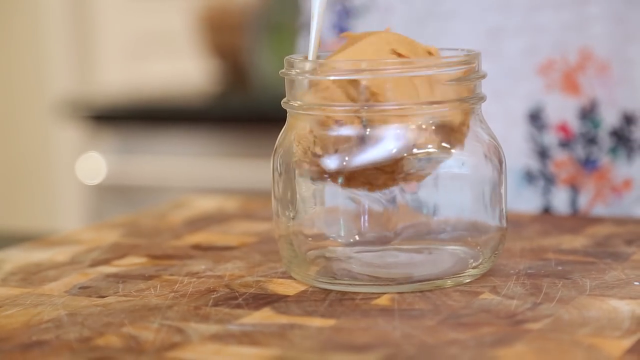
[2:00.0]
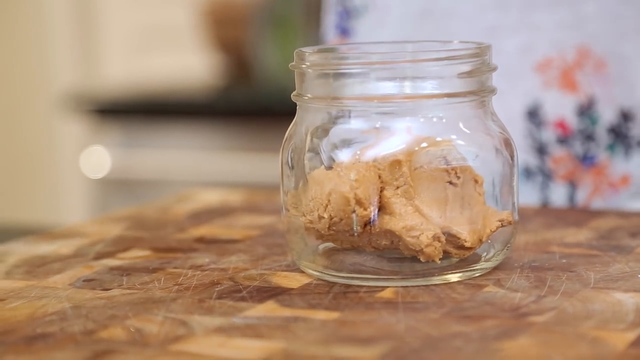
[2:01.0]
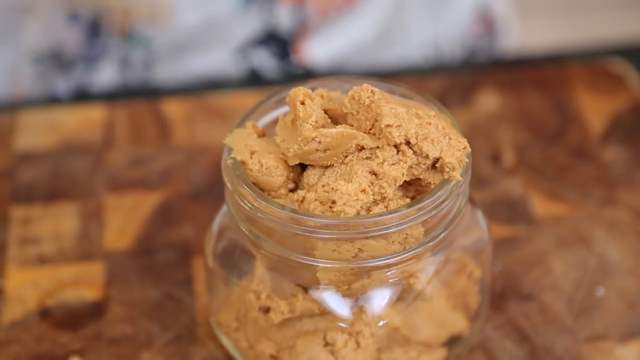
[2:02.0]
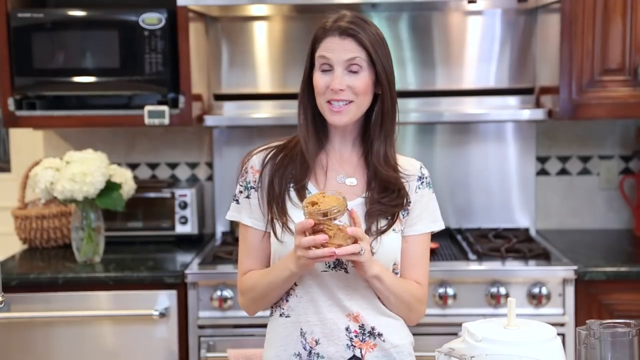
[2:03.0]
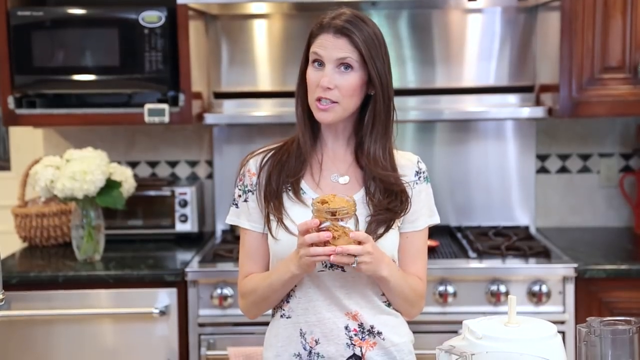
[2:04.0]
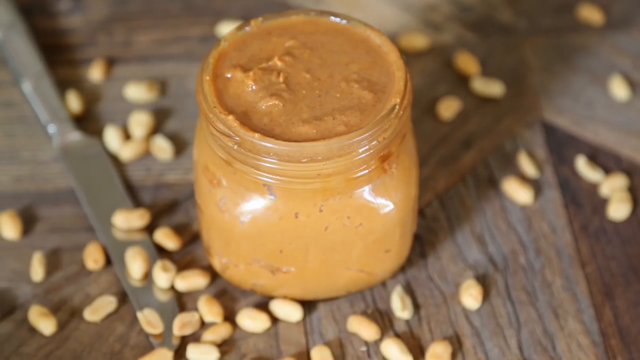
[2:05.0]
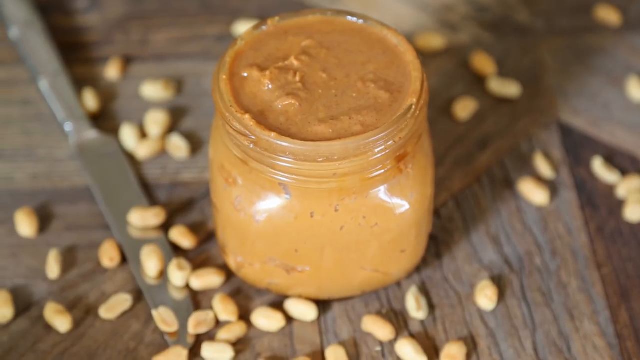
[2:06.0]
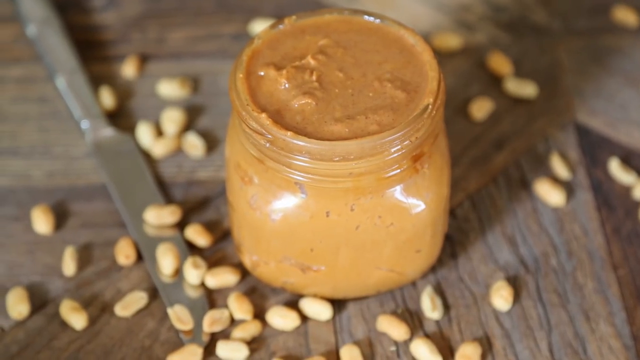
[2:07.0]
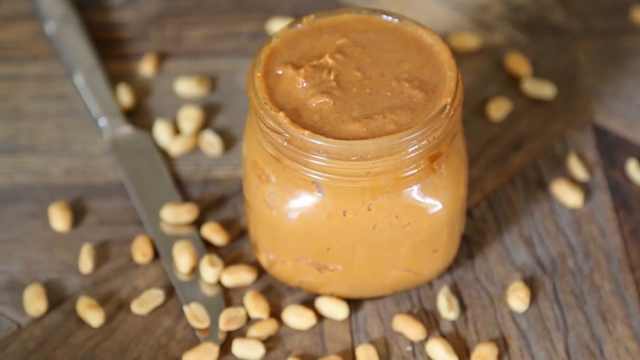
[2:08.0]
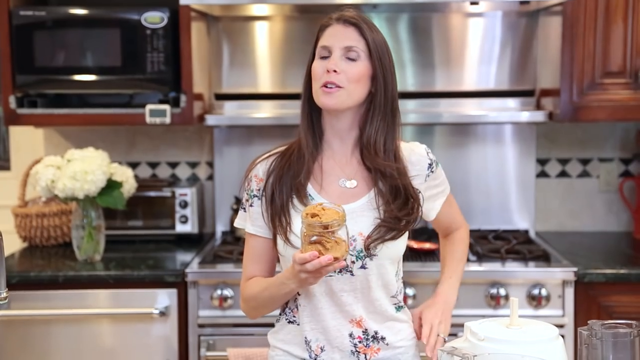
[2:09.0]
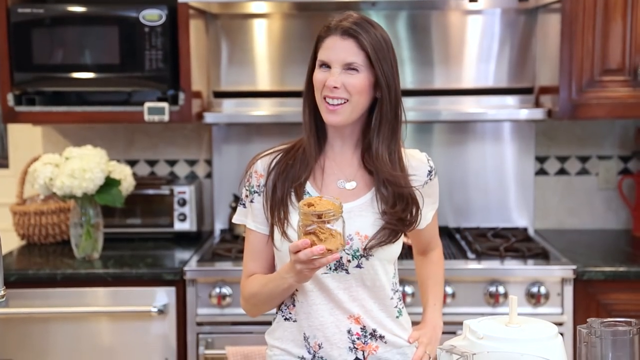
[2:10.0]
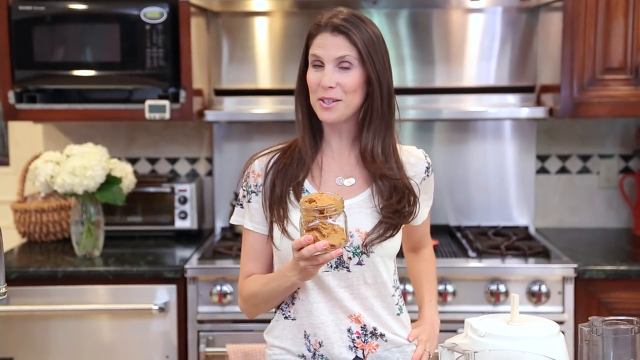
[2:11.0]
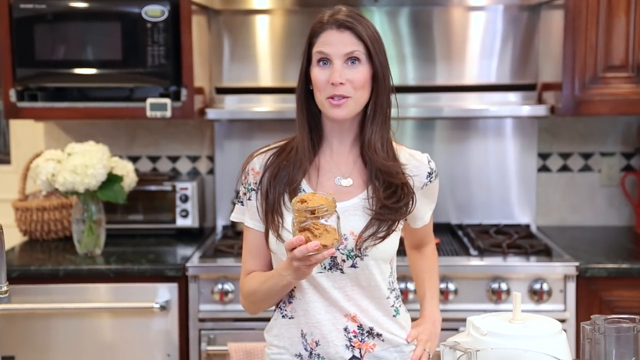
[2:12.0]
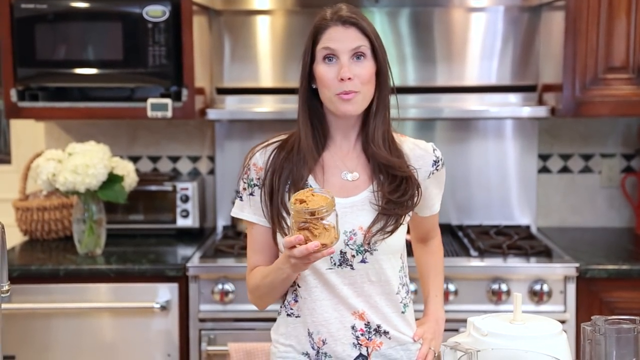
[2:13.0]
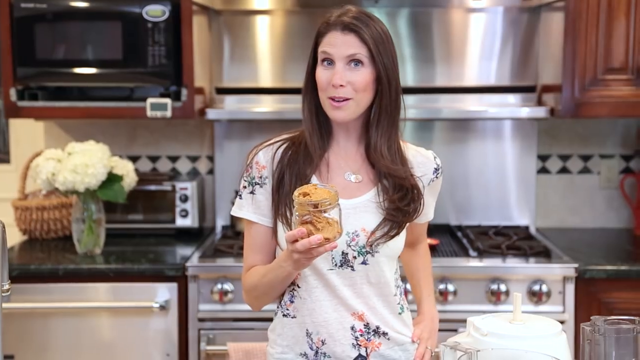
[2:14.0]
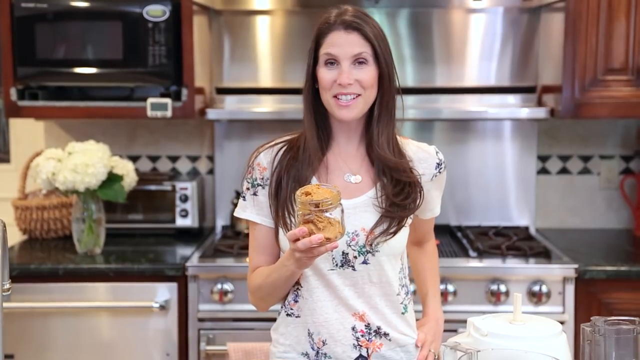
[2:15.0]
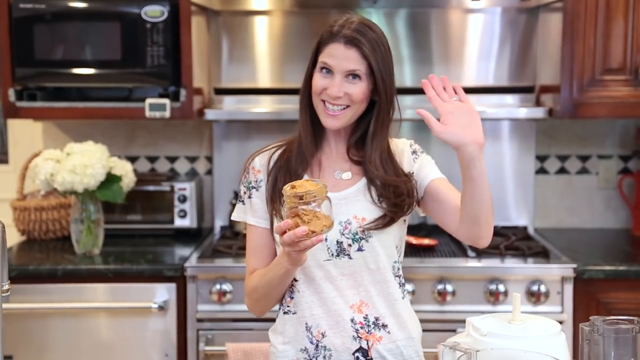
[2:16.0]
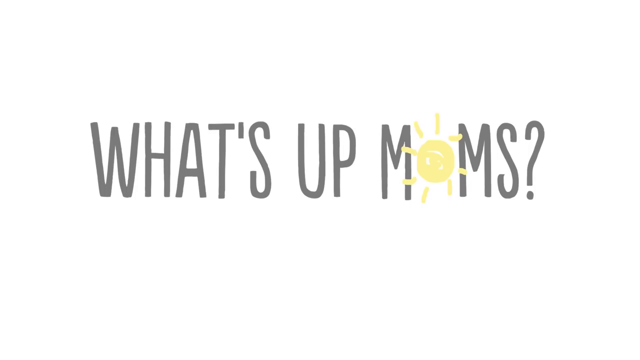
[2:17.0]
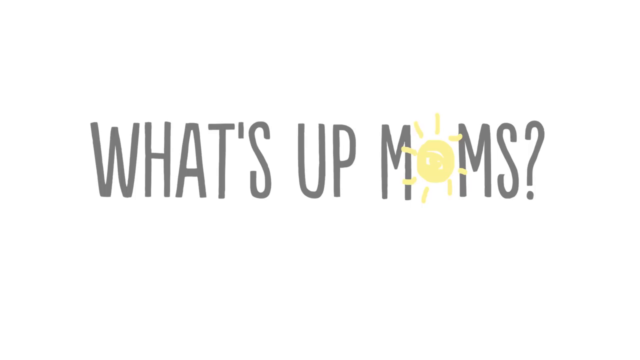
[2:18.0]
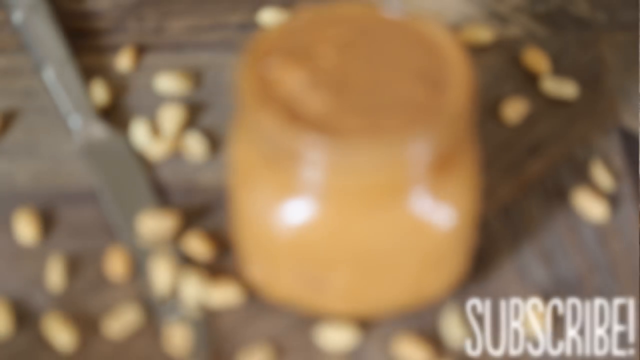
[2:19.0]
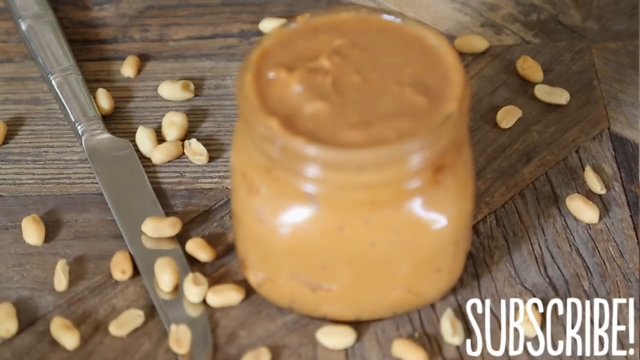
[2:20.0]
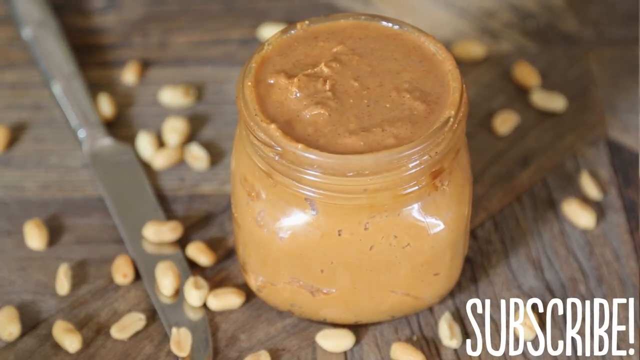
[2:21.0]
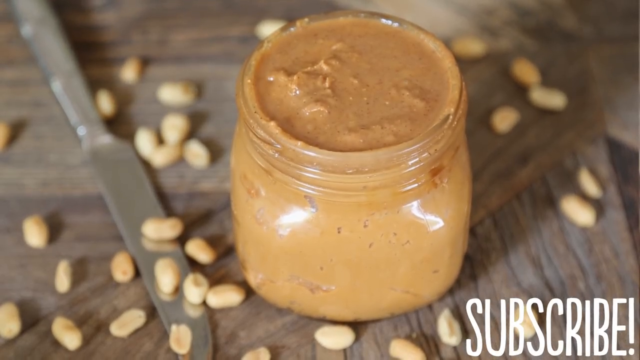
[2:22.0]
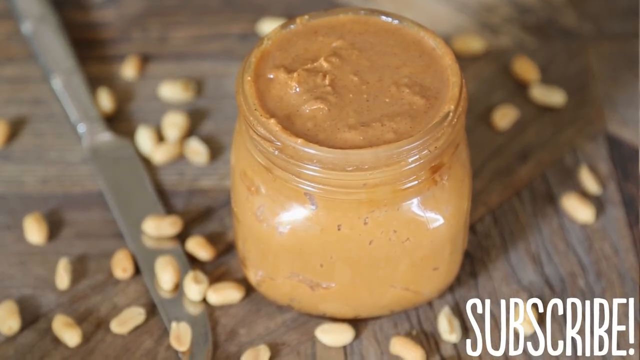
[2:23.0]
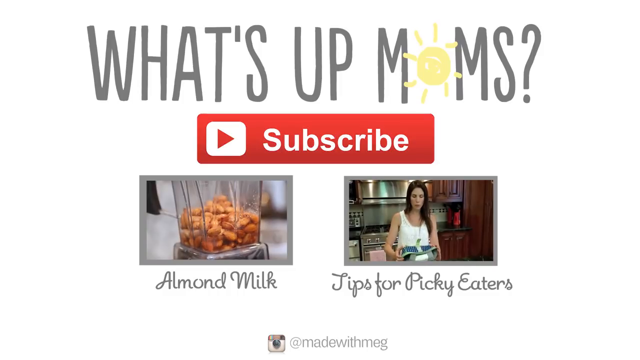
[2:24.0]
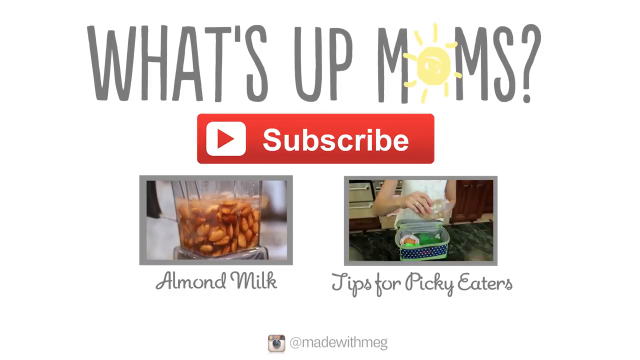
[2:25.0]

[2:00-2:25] The woman is at the back of the counter. A glass container is on the table, which is brown with an ombre gradient. The ball of crushed peanuts from the blender is pushed into the glass container; it is brown and is pushed down inside. An aerial-view image then shows the smooth peanut butter inside the jug, with a knife and a brown cutting board around it, and peanut seeds on top of the cutting board.